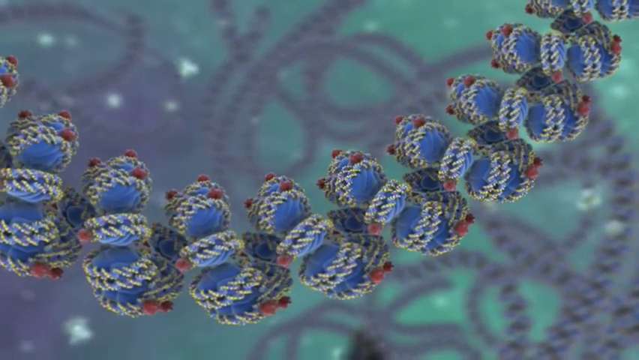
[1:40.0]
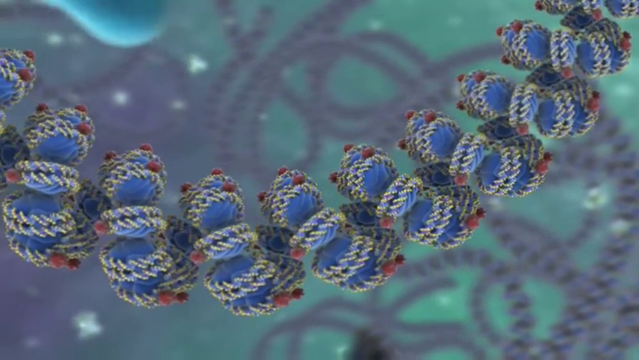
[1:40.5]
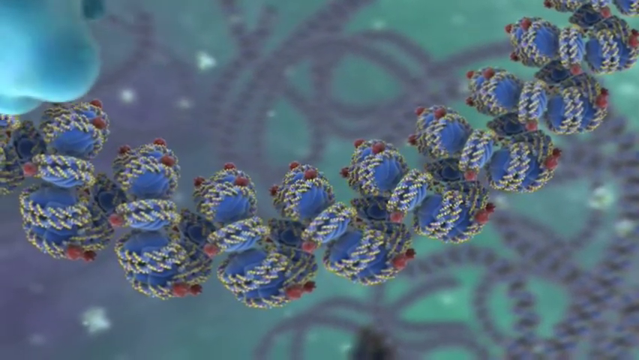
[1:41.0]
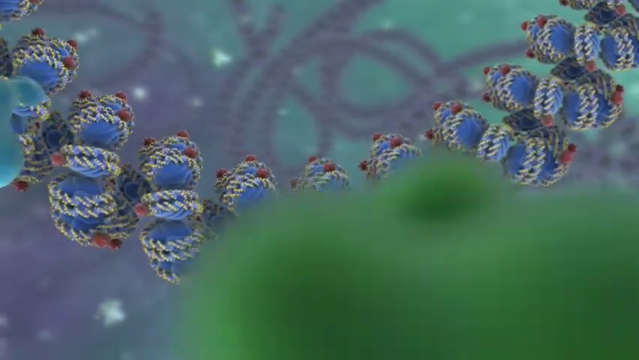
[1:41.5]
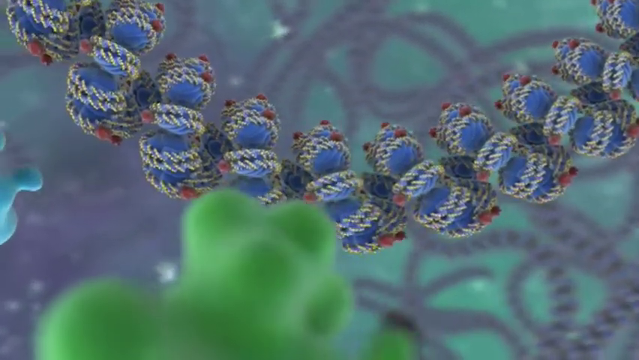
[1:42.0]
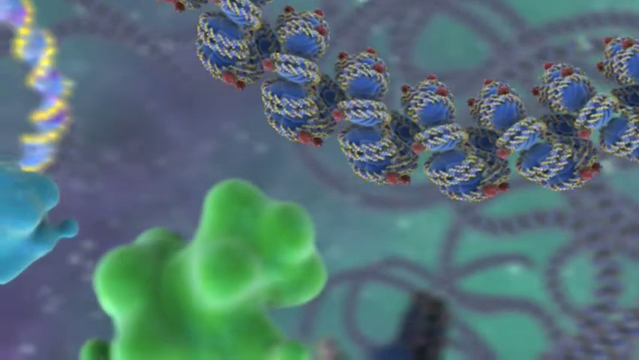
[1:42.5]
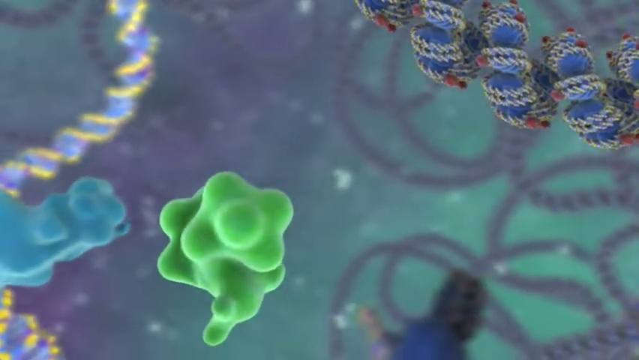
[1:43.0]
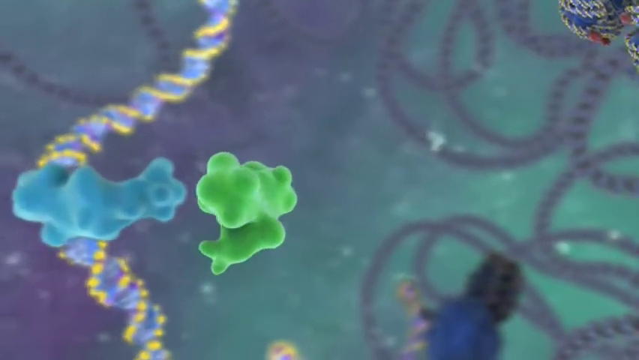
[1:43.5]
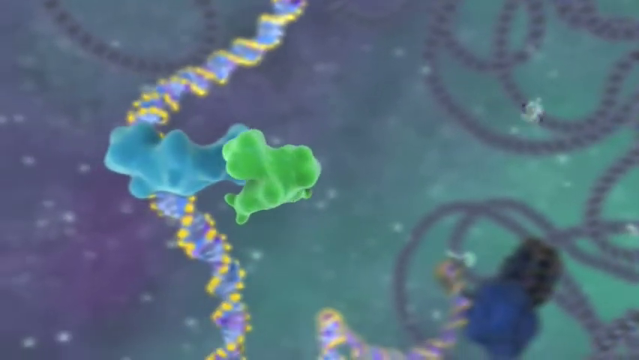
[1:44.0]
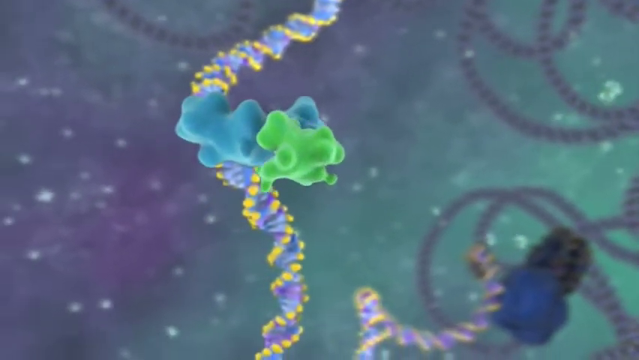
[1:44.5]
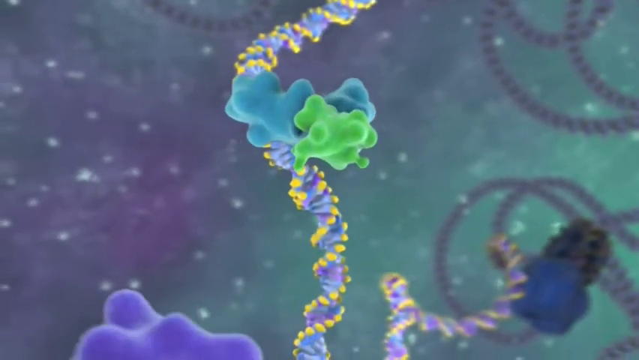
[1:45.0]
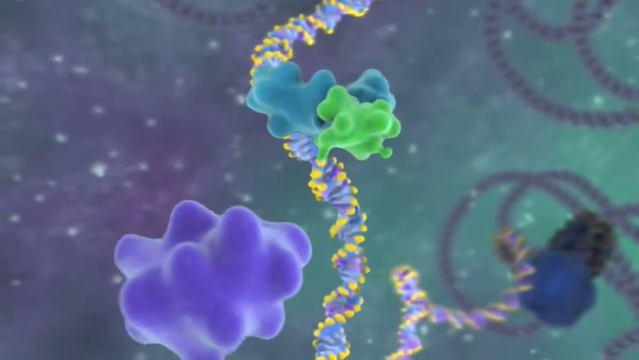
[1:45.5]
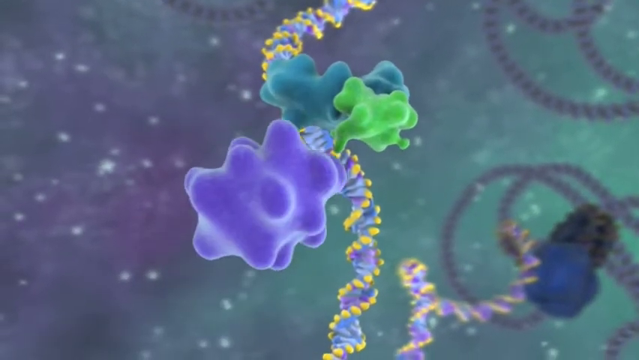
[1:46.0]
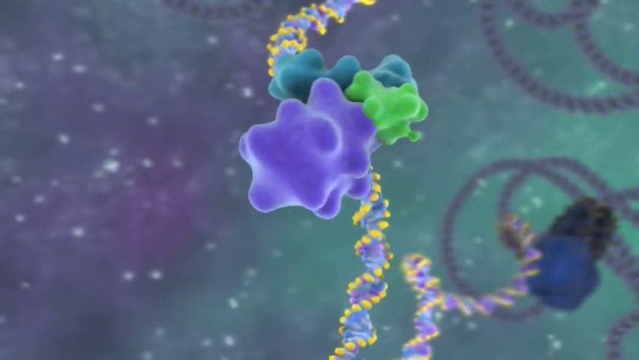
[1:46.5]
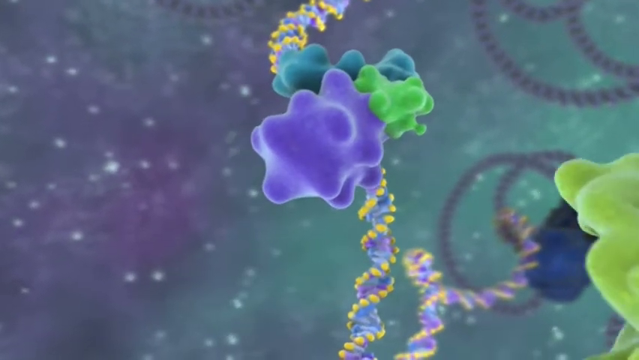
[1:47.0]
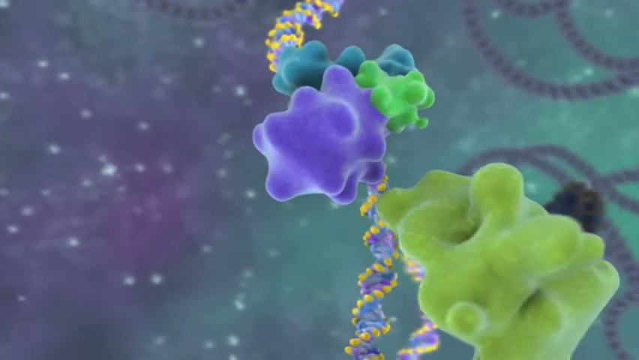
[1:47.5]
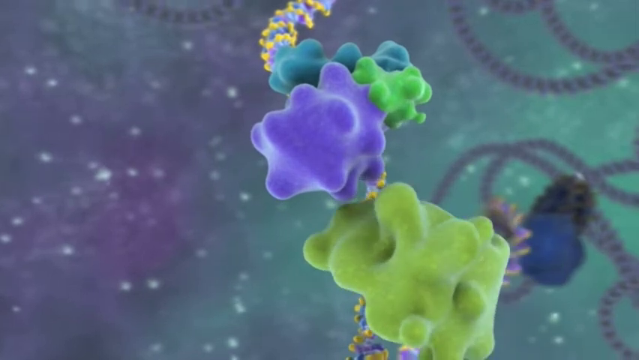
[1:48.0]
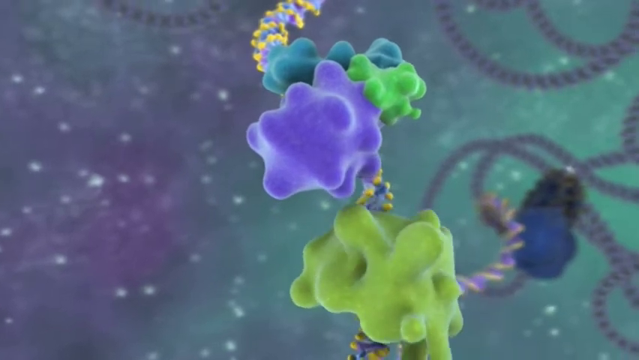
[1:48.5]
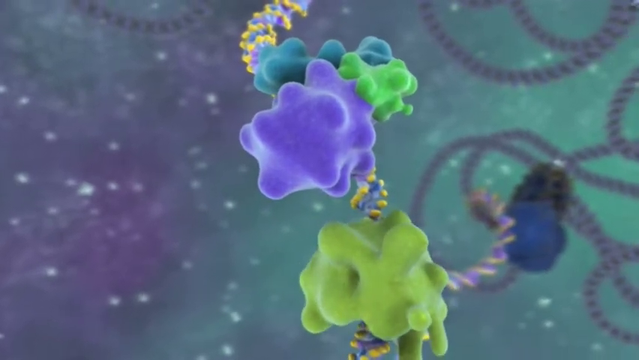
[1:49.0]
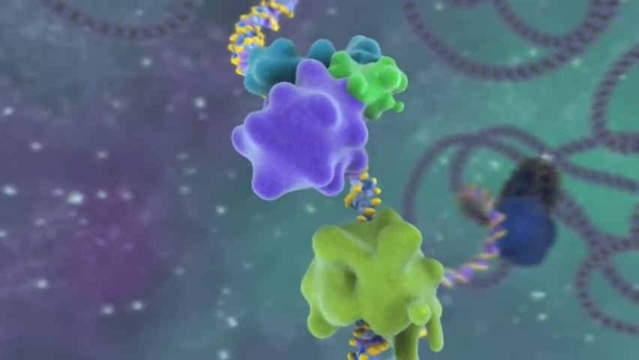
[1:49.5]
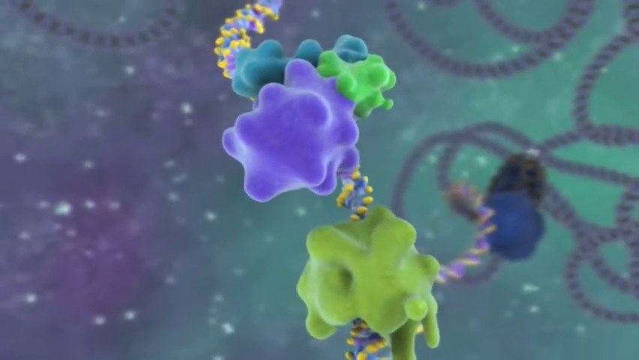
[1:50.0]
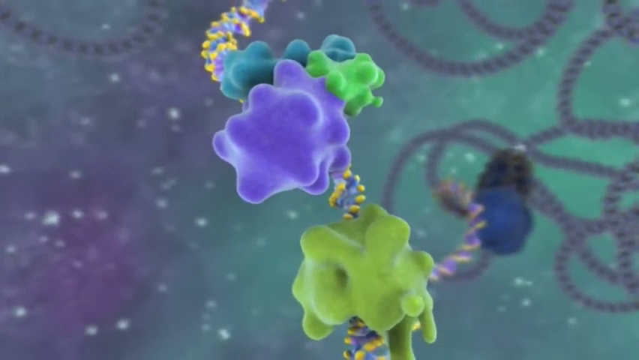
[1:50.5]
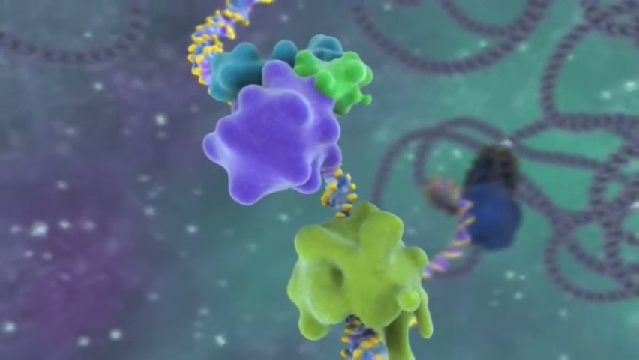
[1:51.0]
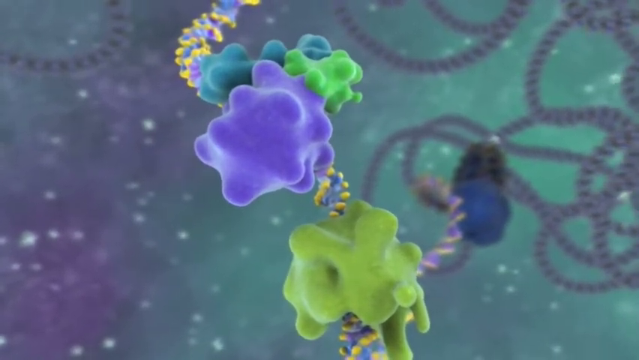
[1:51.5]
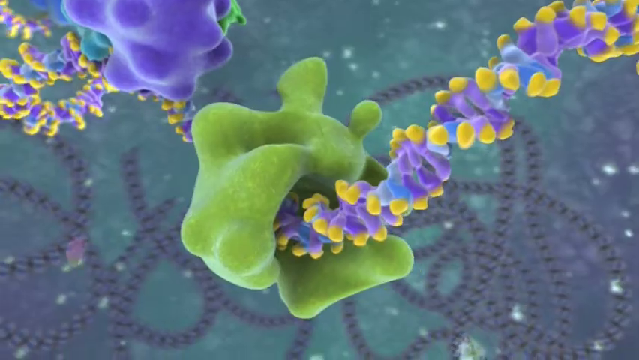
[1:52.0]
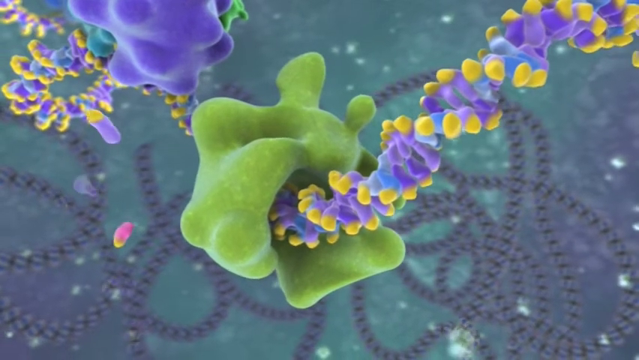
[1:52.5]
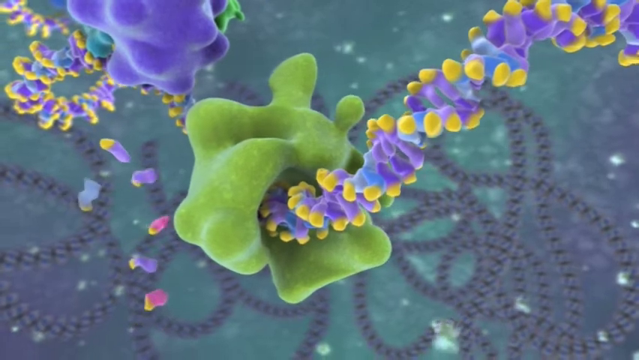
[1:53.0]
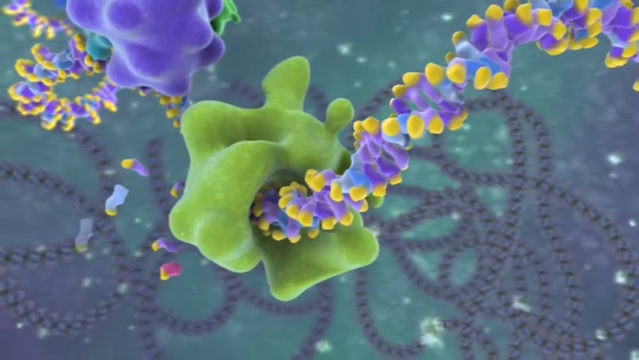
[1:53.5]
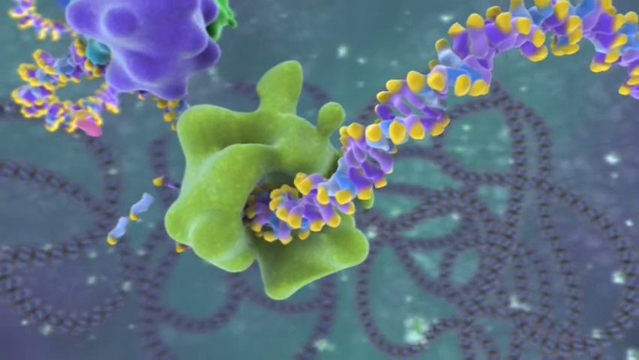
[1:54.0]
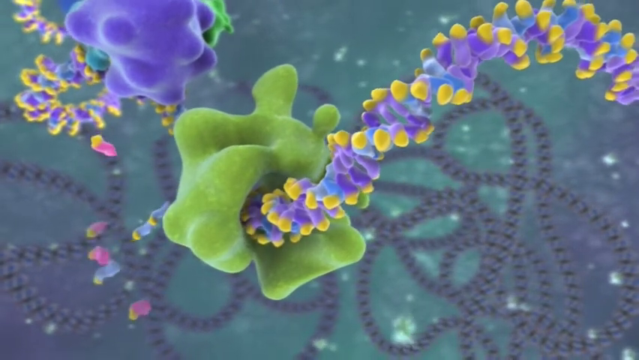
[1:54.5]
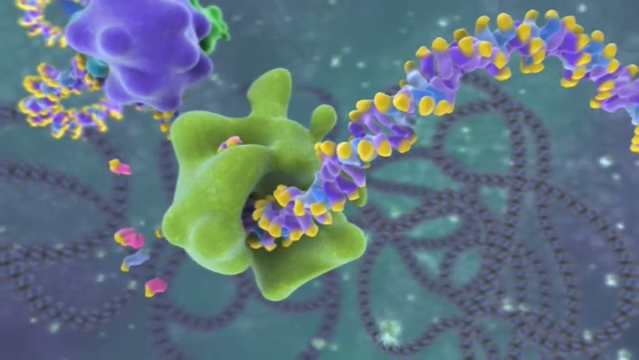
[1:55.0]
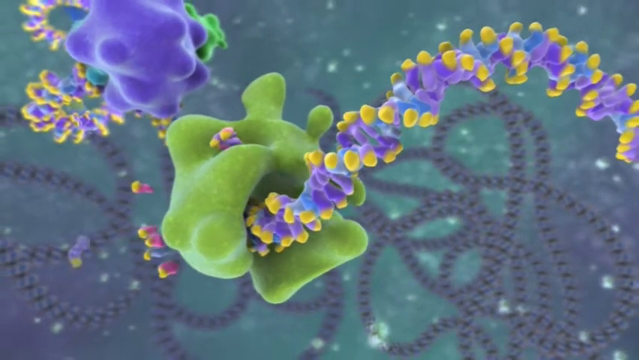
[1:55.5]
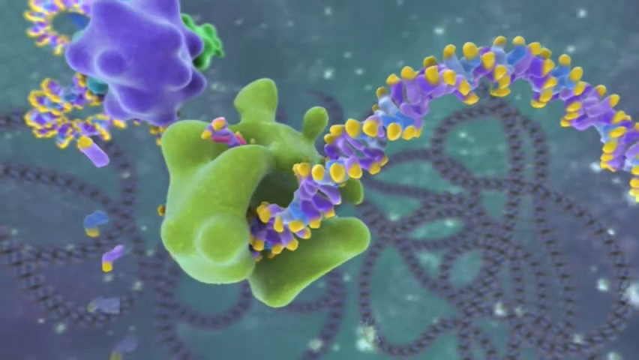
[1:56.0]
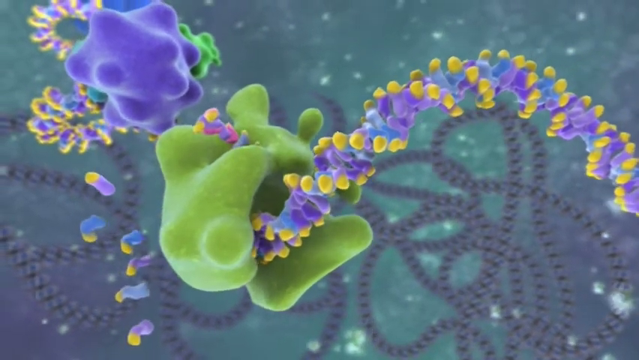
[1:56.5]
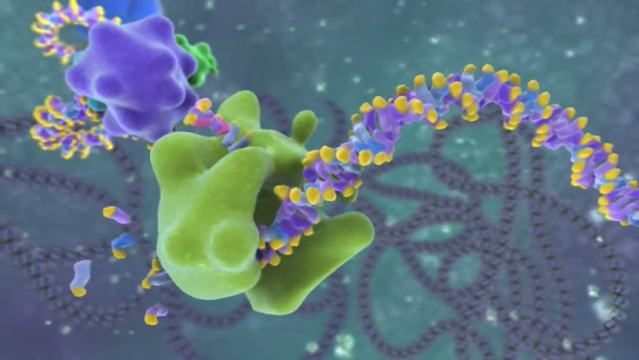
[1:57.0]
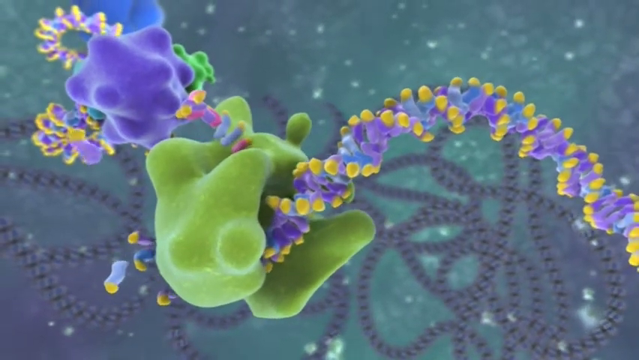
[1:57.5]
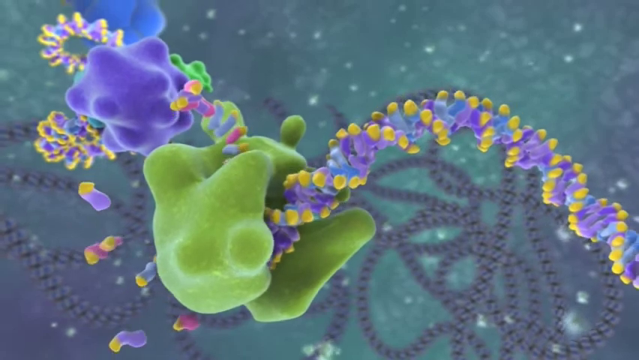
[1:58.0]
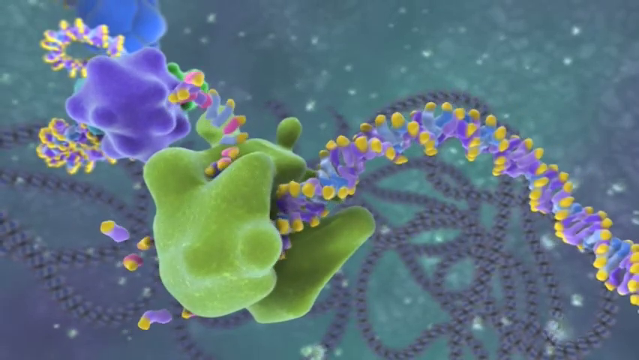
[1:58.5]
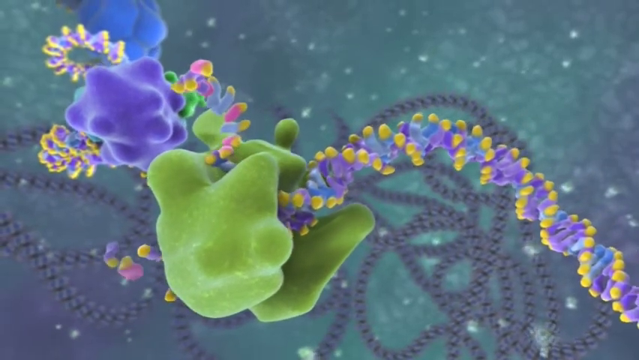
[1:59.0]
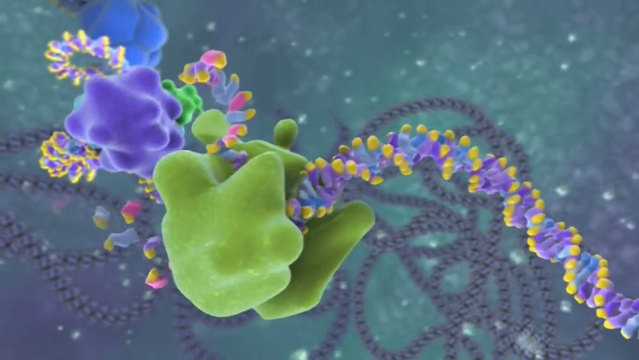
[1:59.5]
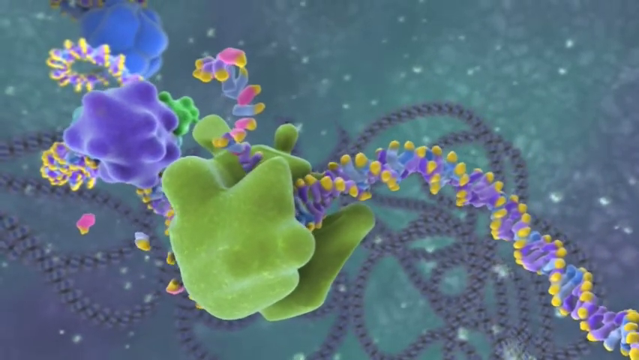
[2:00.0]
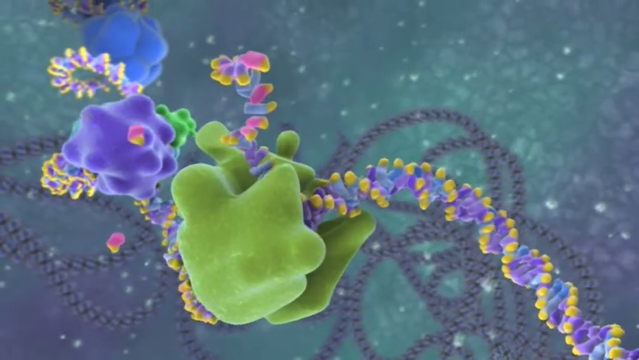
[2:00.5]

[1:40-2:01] Several blue, yellow, purple and red structures are visible. The camera follows a green blob and a blue blob floating freely through the body, and they attach themselves to one of the coils: the blue and purple coil with a lot of yellow dots wrapped around it in a spiral fashion. From the middle left of the screen, at the bottom side, a purple blob joins onto the green blob. Then from the bottom right, a dark green blob joins just underneath the purple blob, making four blobs on the structure. The dark green blob wraps itself around the structure in a circular motion. Small gummy-bear-shaped parts that look like they previously came from one of the rope-like structures, purple, blue or pink with yellow tips, are attracted into the dark green blob. The dark green blob takes in the little bits, and as they pass through it they form a rope-like structure, forming the coil.